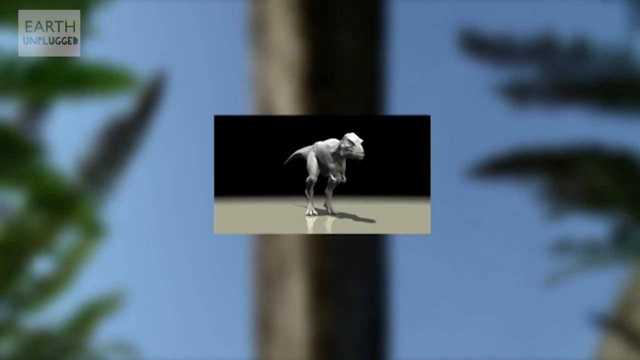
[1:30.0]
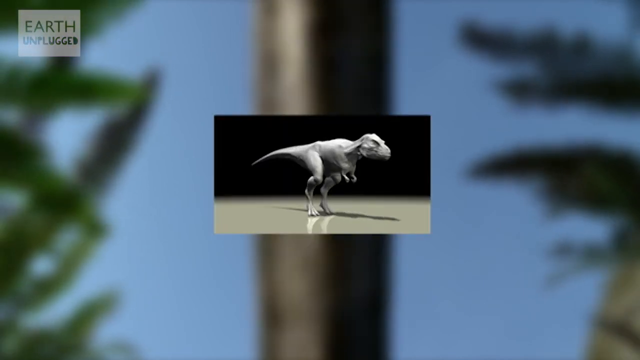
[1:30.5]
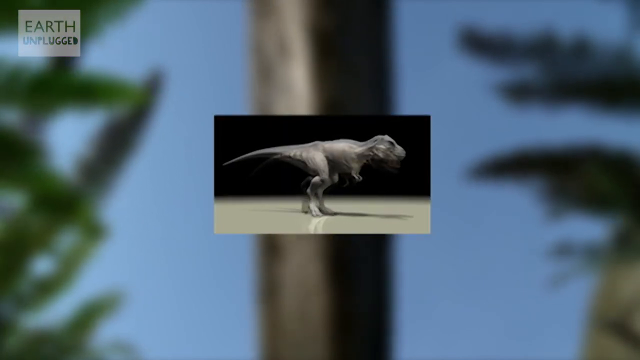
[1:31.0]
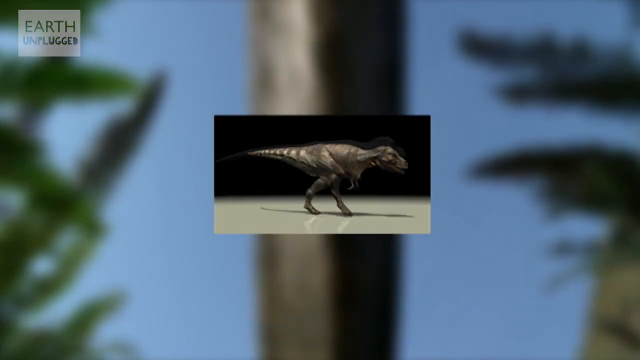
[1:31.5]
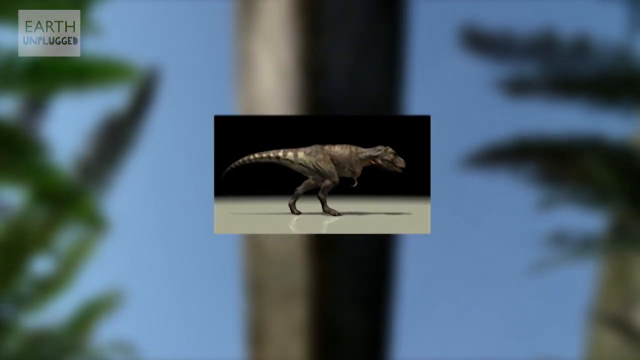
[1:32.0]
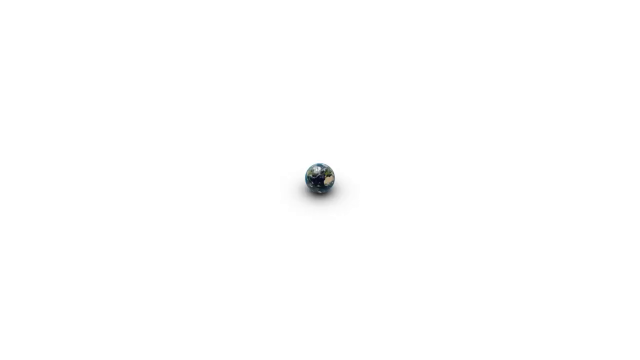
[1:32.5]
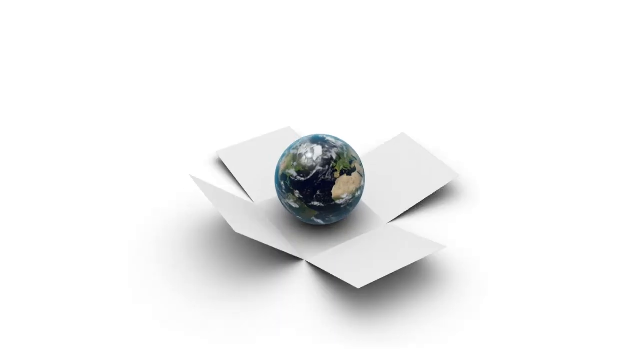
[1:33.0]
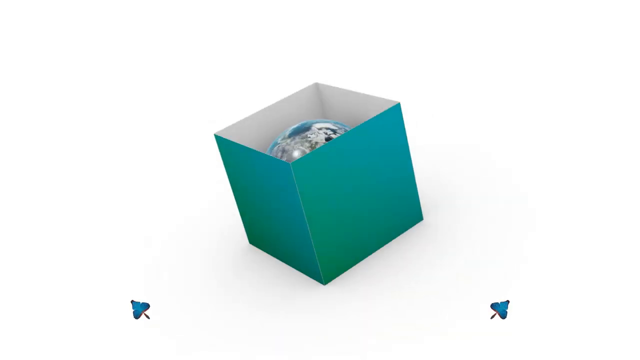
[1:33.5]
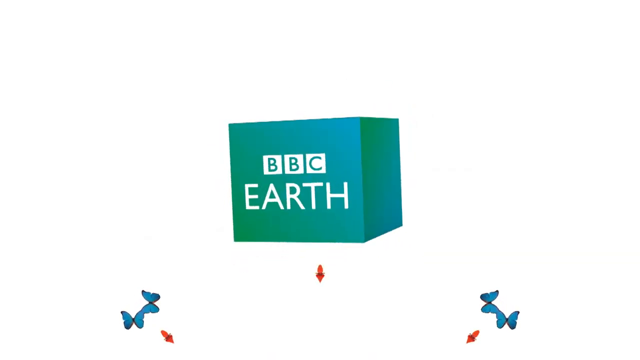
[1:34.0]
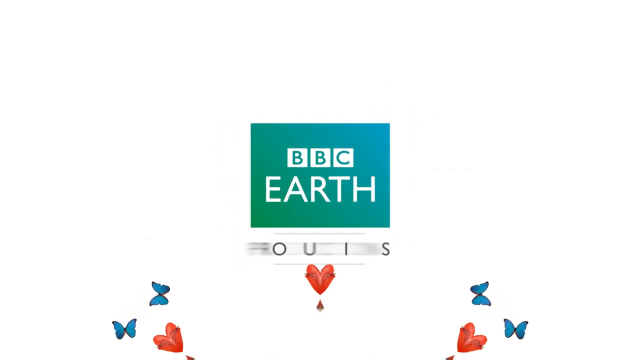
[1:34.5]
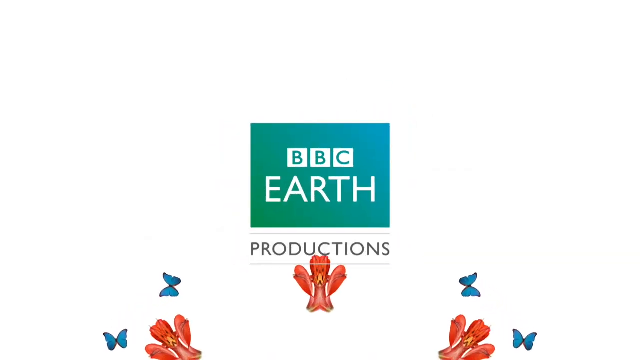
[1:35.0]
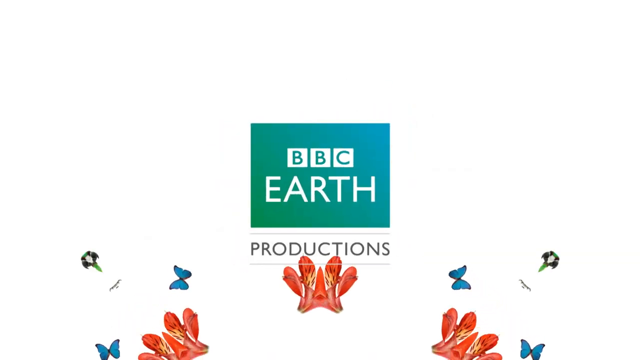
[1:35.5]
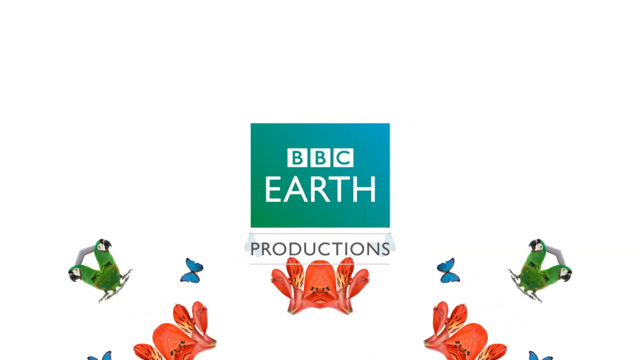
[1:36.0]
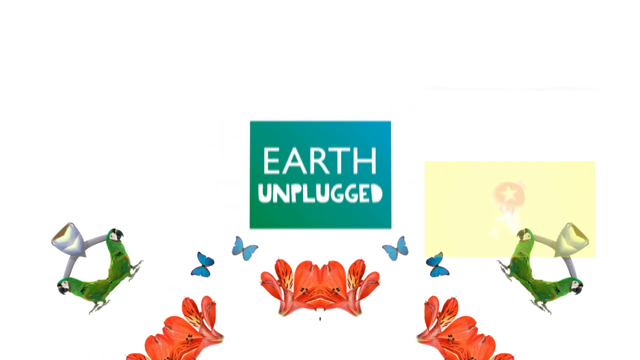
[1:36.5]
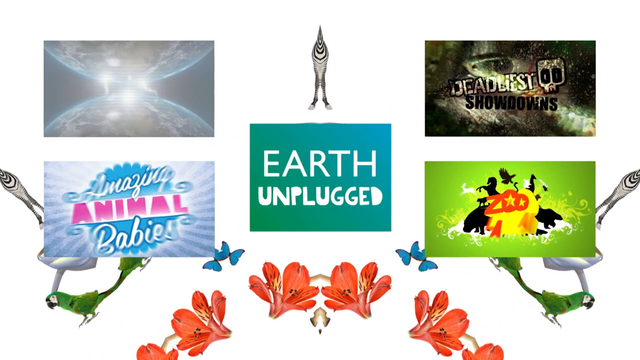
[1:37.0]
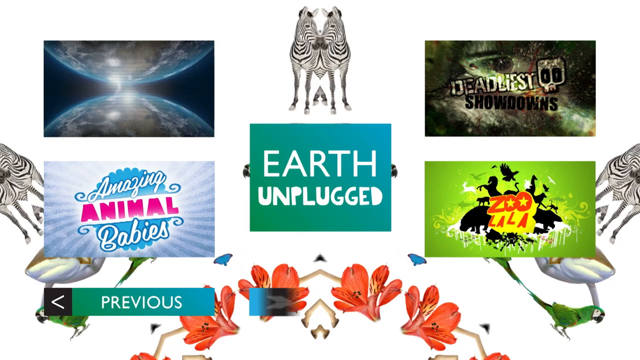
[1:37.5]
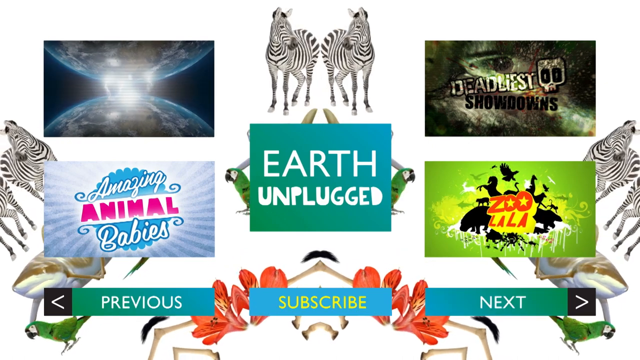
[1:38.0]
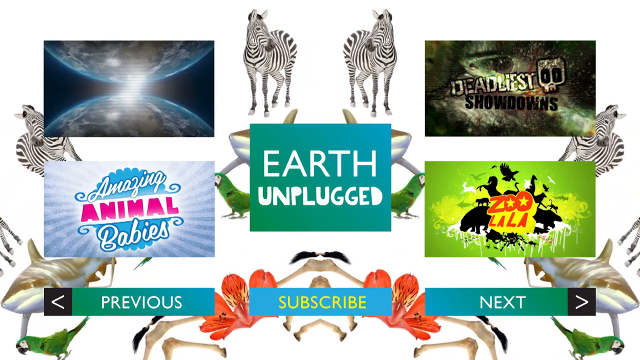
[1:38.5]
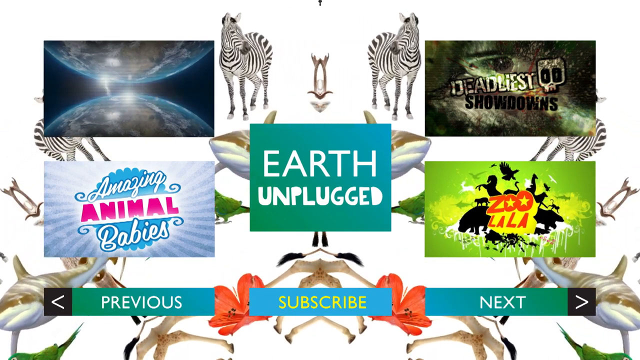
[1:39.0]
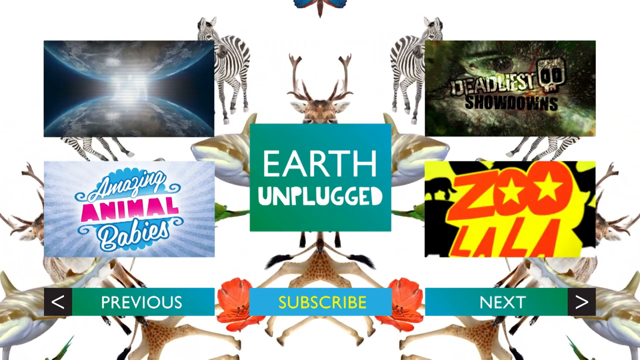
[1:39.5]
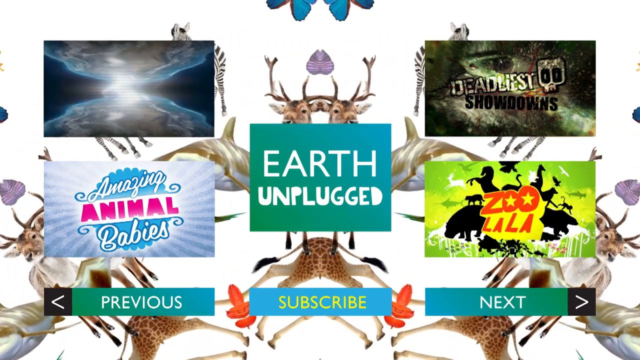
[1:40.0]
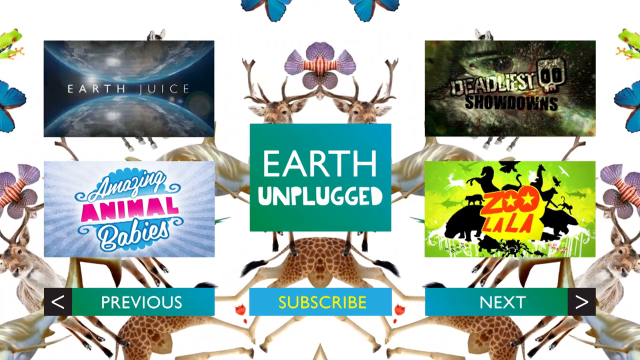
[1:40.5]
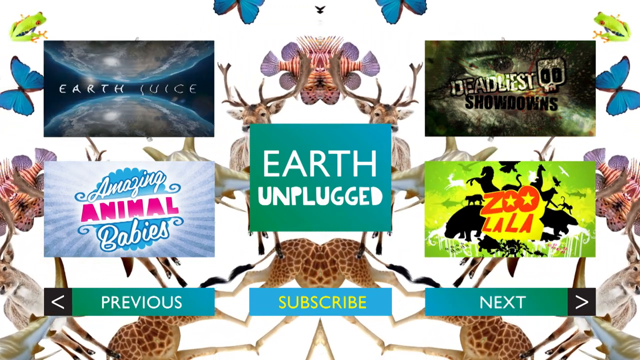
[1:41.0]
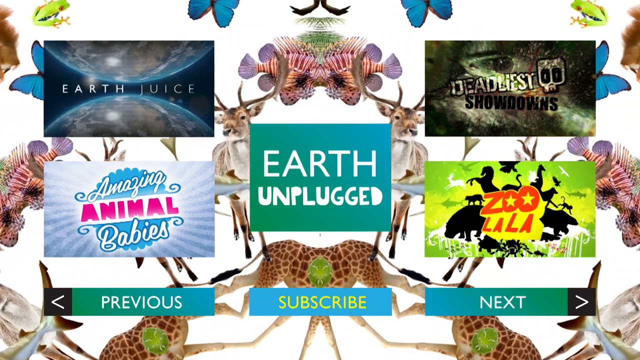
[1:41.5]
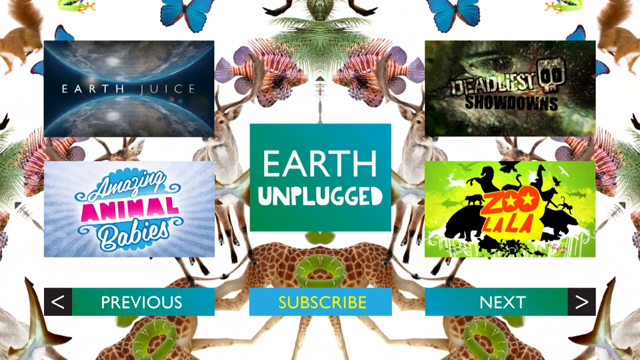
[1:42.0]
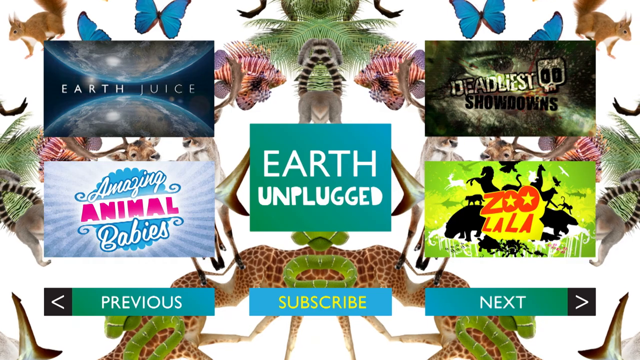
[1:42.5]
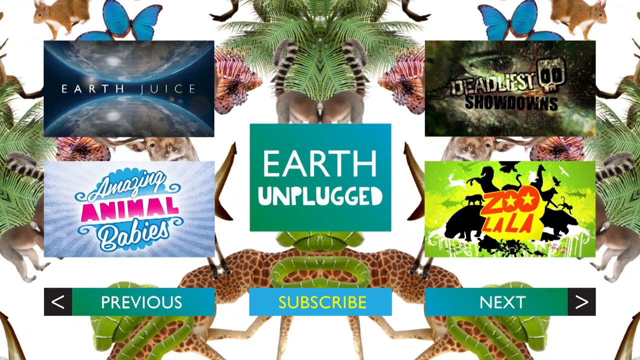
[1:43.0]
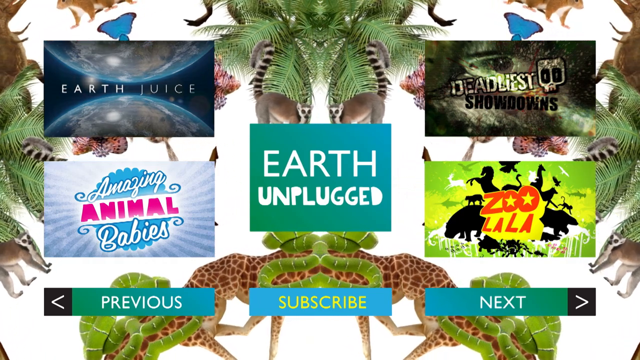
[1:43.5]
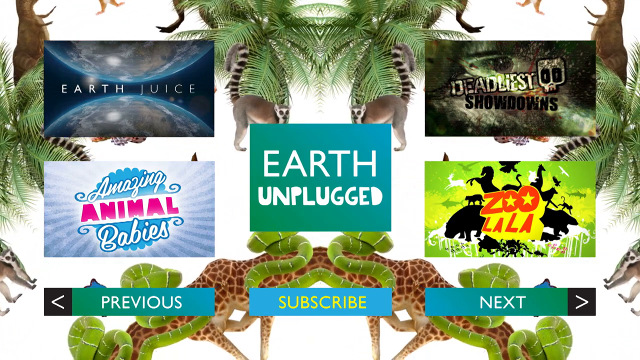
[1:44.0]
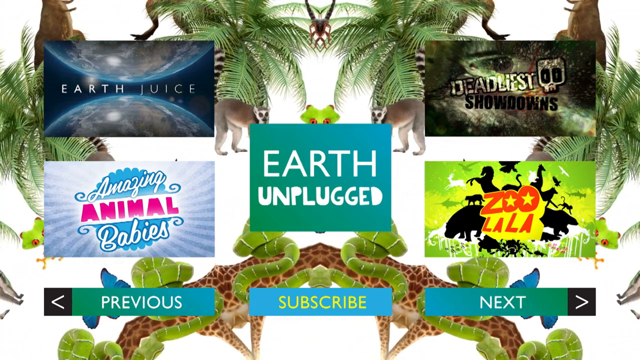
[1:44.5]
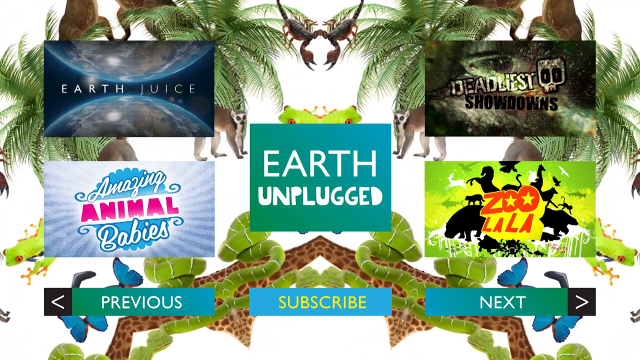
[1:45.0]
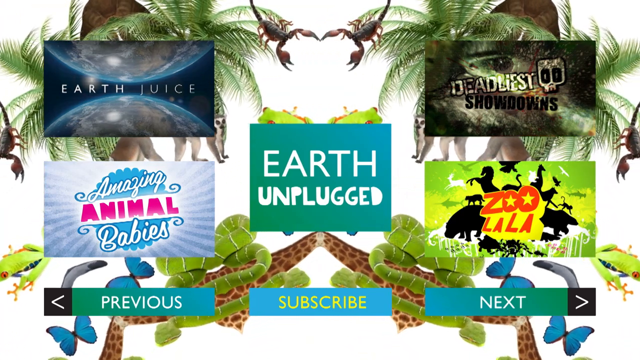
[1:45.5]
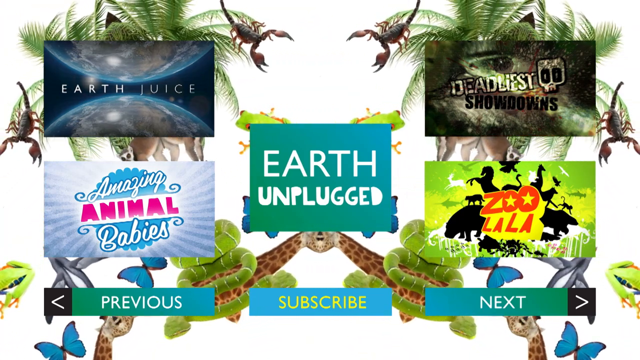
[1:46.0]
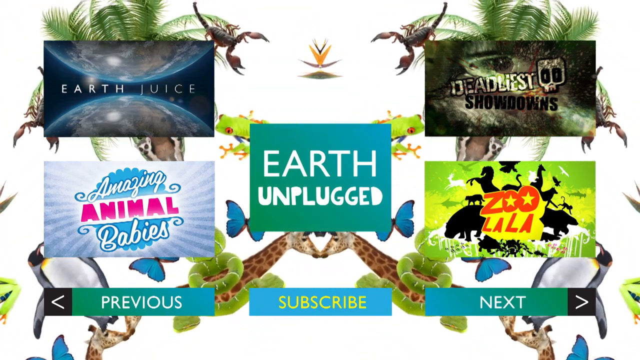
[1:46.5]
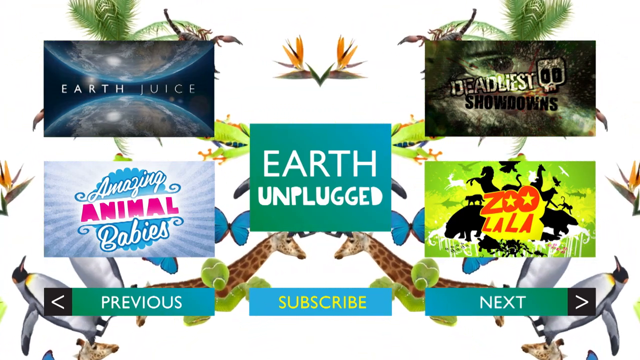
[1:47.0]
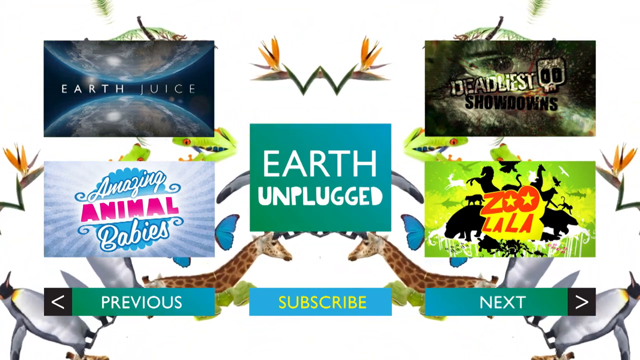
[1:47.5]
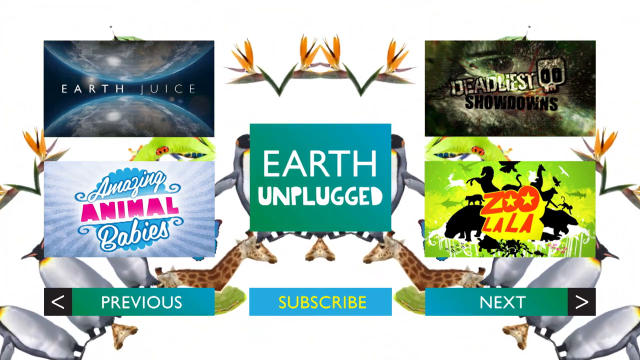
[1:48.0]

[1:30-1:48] What appears to be a mold of a T-Rex spins counterclockwise; it is gray at first, then becomes colorized and starts walking. Something blurred out in the background of the forested, wooded area seems to be coming closer or growing bigger. Then the earth appears and gets put in a box with two phrases: the first is "BBC Earth" with the word "productions" underneath, and the second is "earth unplugged." Then the kaleidoscope of animals appears: a deer, a giraffe, a zebra, a frog, a scorpion, a penguin, some plants, and butterflies, with "earth unplugged" in the middle. On its four corners are advertisements, including "amazing animal babies" and "deadliest showdowns" on the right and "zoolala" on the bottom right. The word "next" is on the right, "previous" on the left, and "subscribe" in the middle.